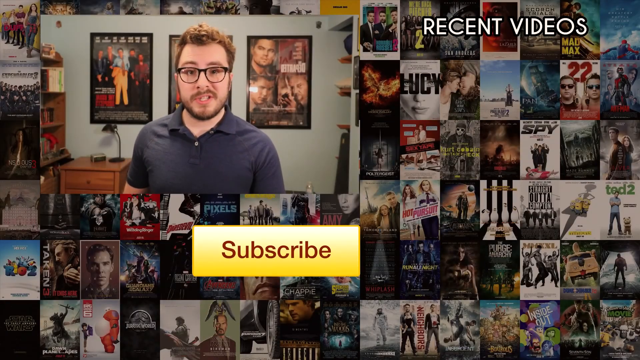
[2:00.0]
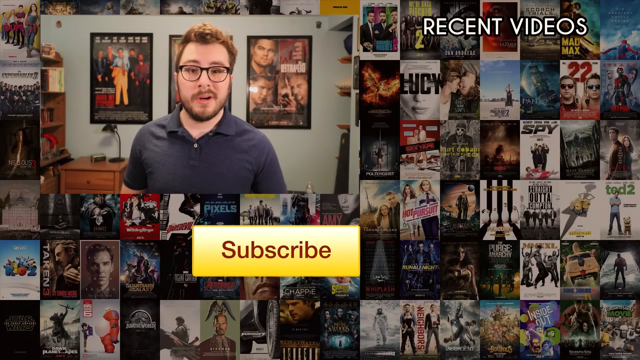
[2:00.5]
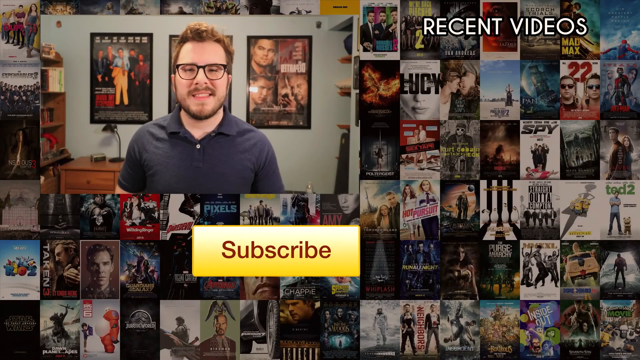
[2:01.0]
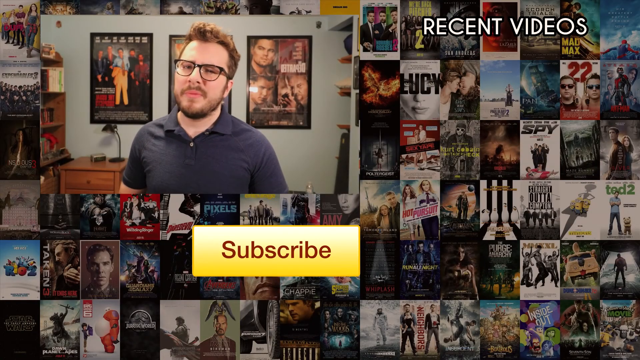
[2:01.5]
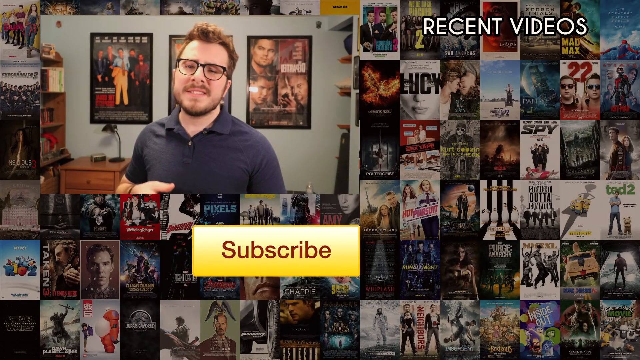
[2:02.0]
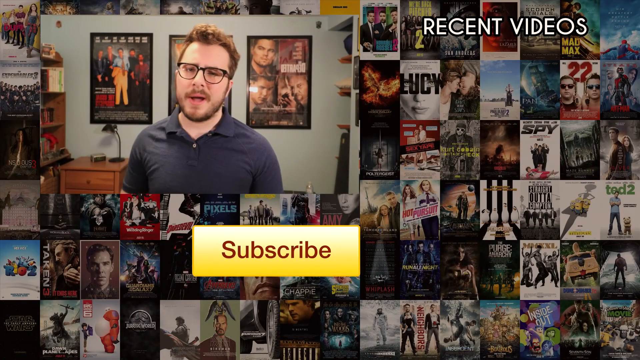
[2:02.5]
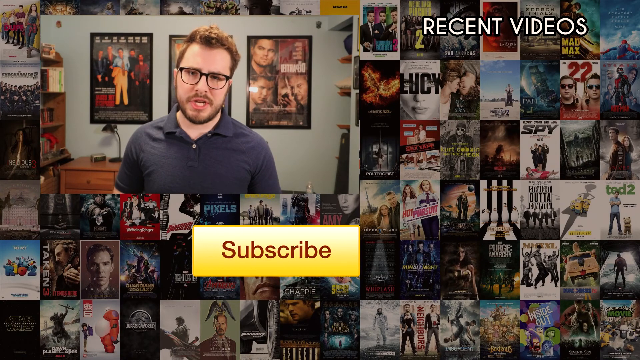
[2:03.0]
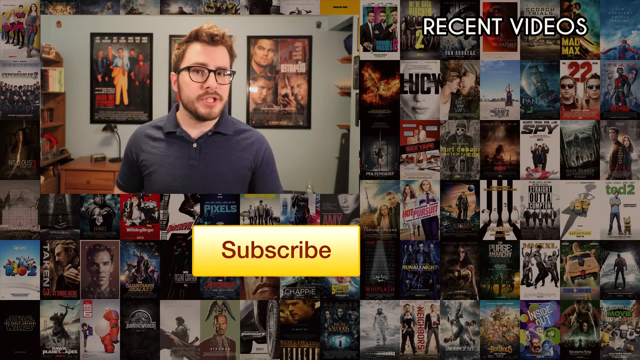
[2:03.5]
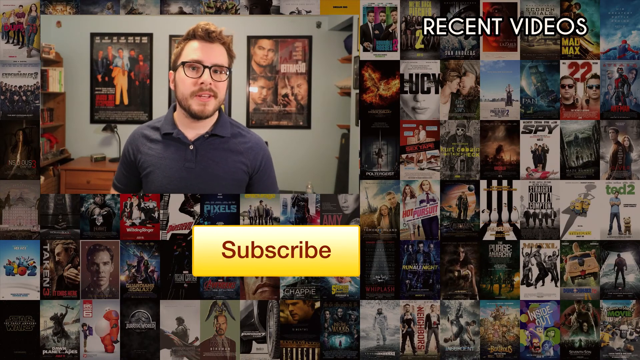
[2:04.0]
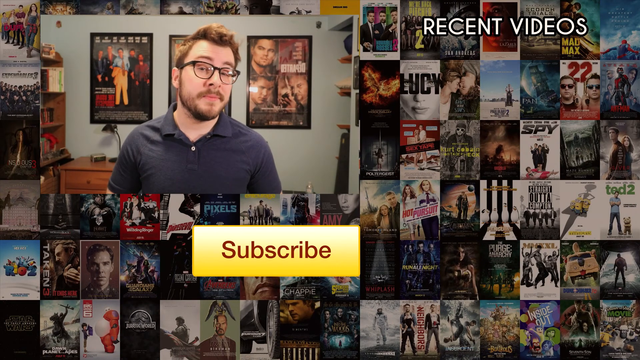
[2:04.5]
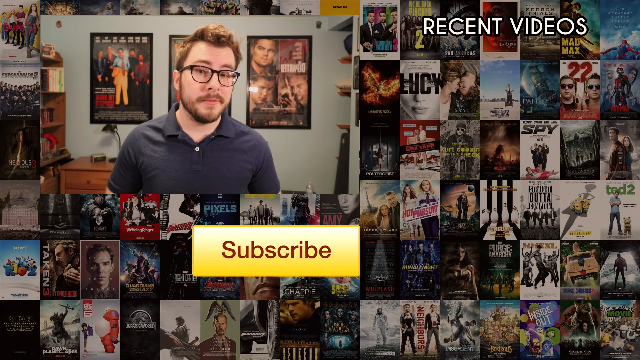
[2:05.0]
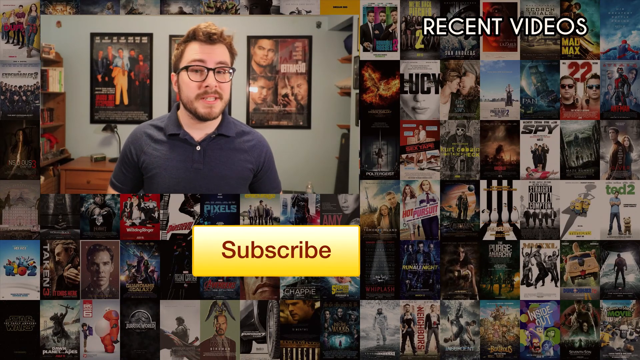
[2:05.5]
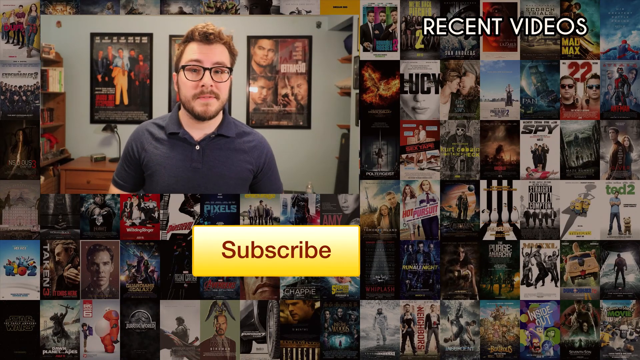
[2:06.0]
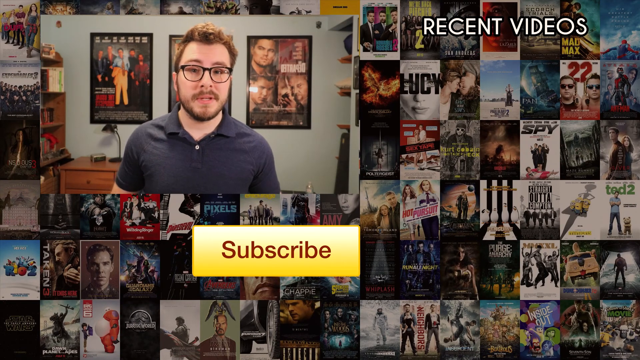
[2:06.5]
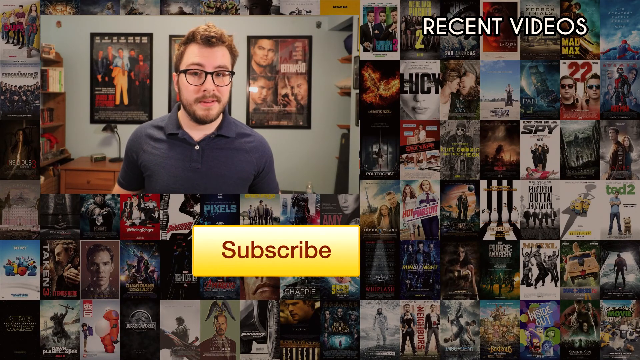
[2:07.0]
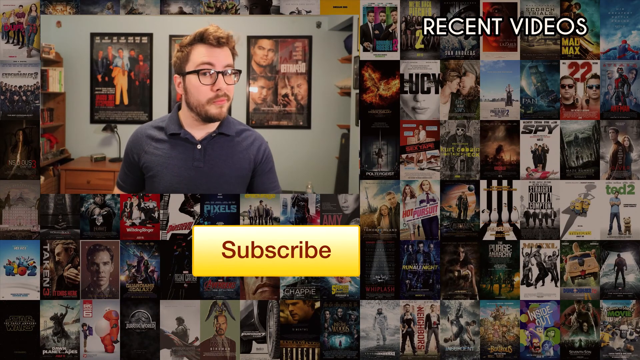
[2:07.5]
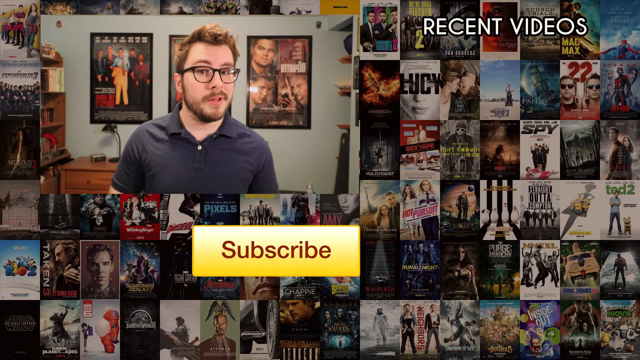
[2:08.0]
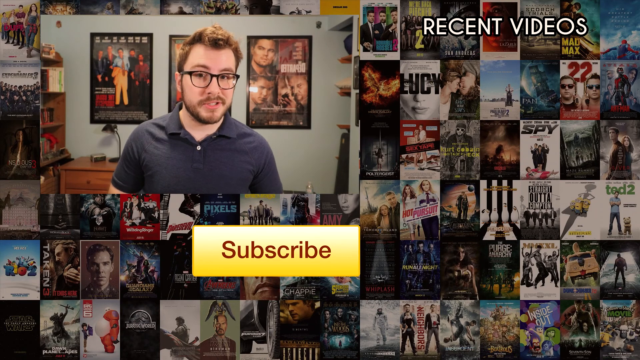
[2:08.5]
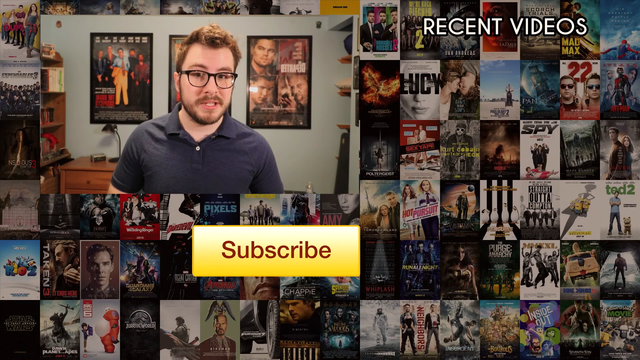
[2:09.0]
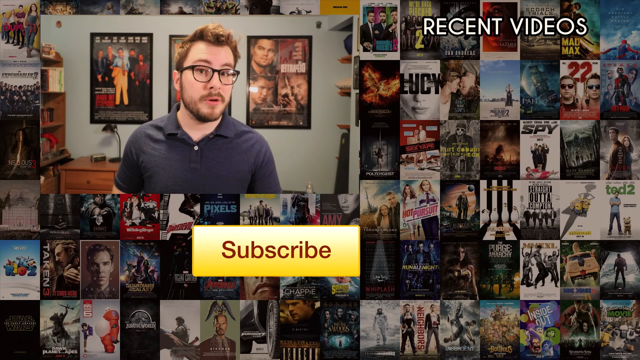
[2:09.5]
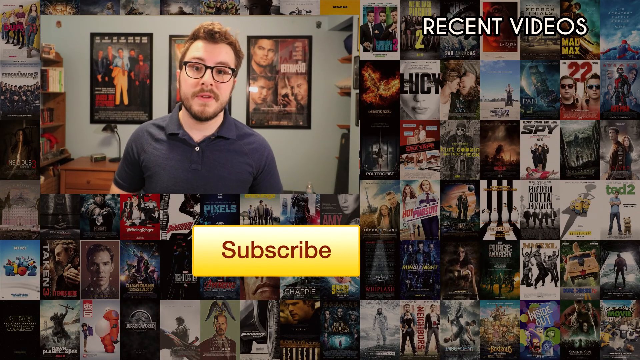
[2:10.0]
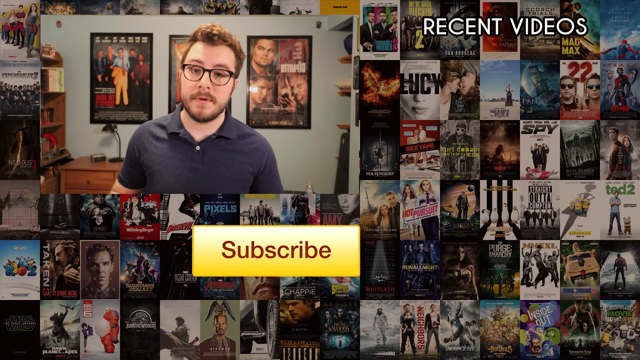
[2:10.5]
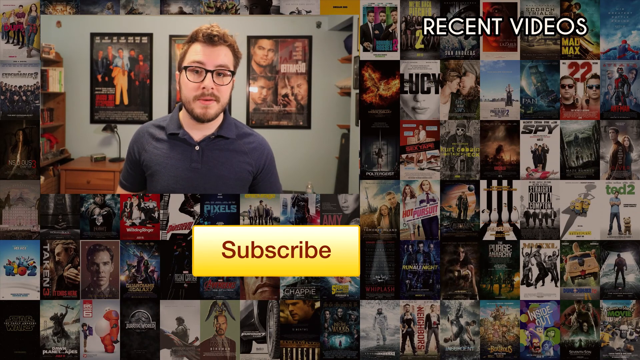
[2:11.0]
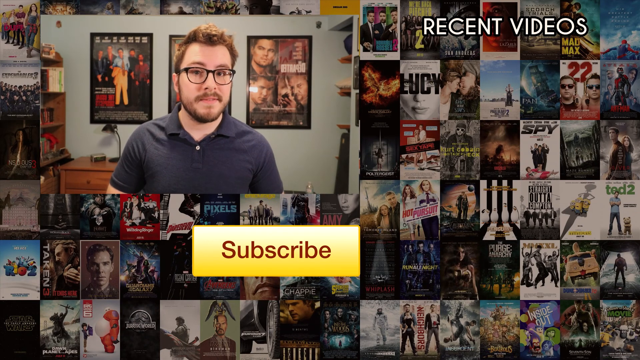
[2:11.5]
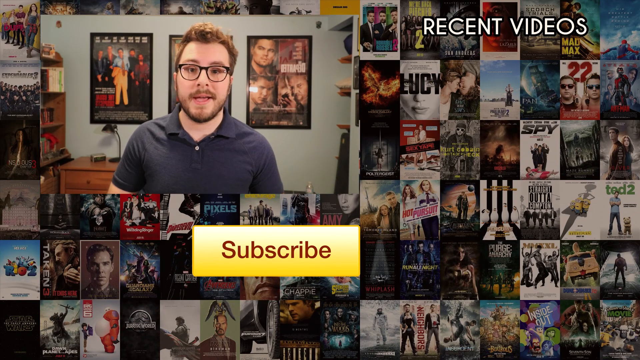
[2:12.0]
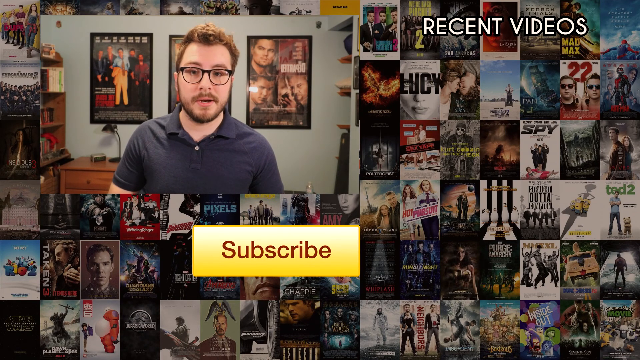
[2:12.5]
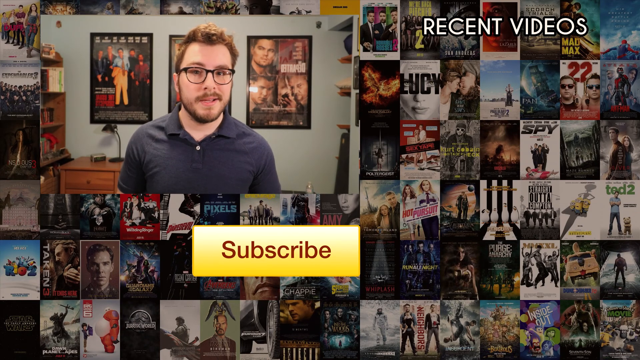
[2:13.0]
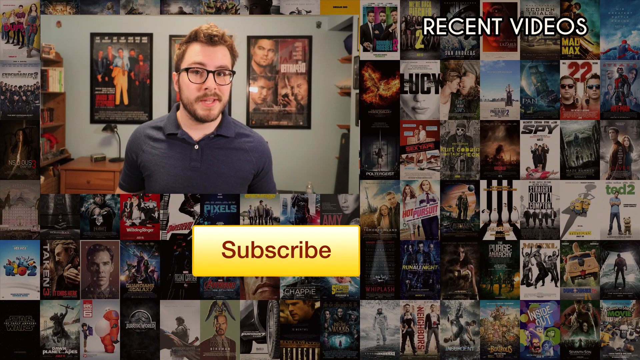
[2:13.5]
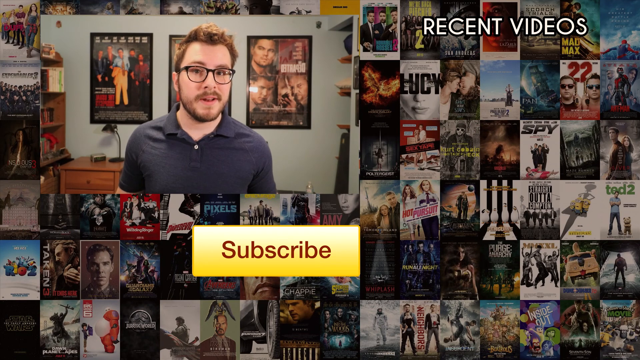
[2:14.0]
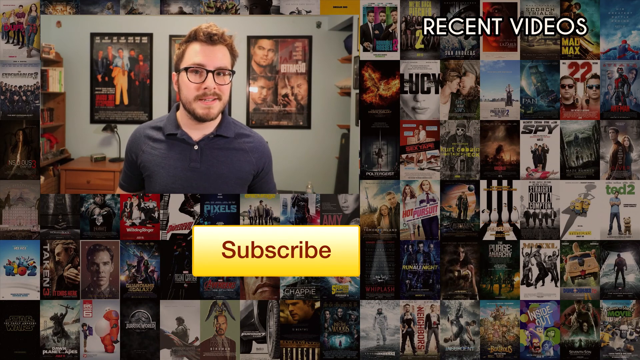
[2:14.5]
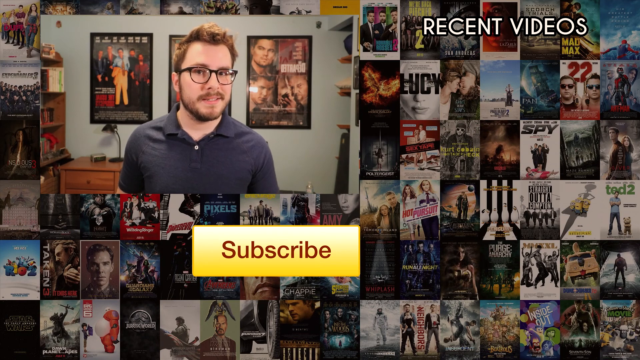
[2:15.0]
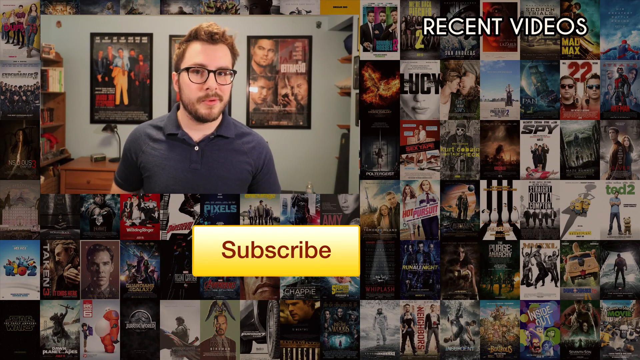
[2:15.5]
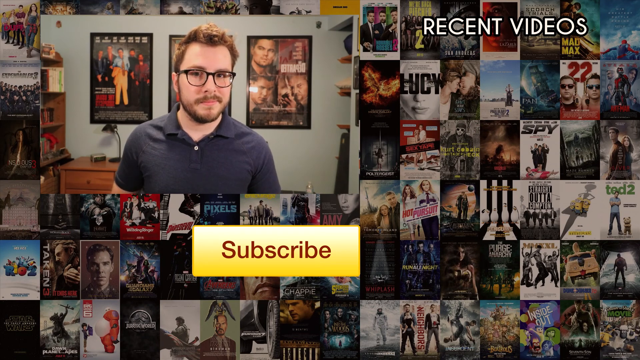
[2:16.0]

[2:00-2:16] Different types of movies are shown behind the man, who apparently has a YouTube channel where he recommends movies. There is a sign to subscribe. The man wears spectacles, has short blond hair and wears a grey shirt. The words "recent videos" are written on screen, with many movies to choose from; one visible movie is Taken. The movies are shown with descriptions and pictures.